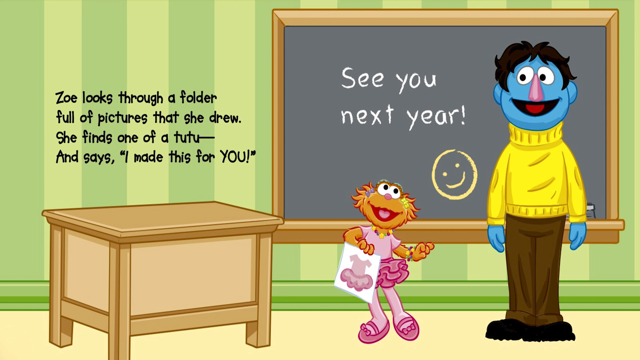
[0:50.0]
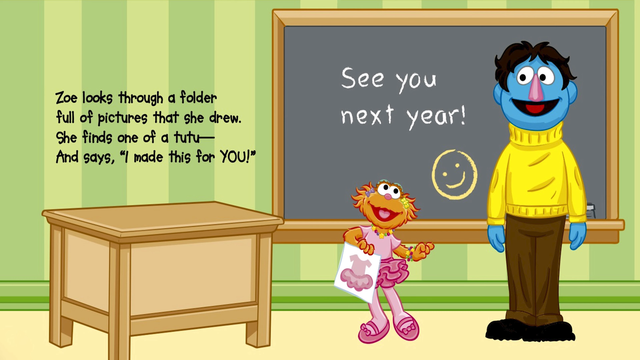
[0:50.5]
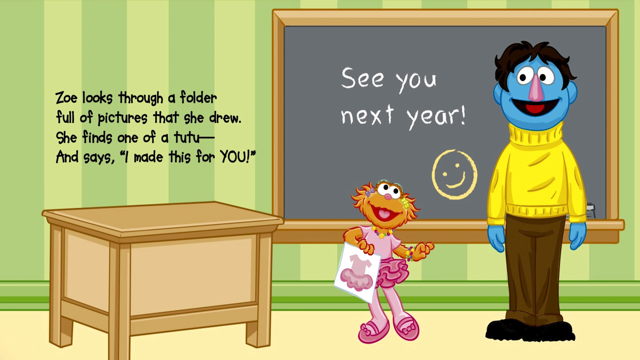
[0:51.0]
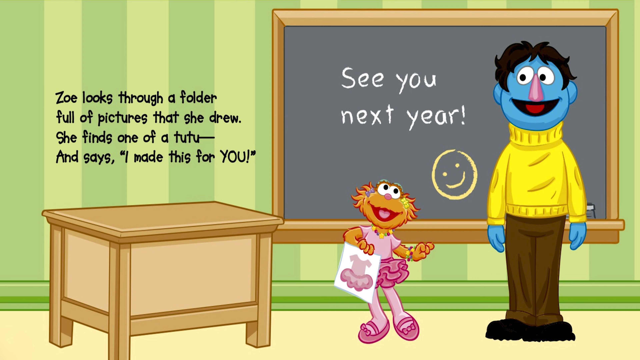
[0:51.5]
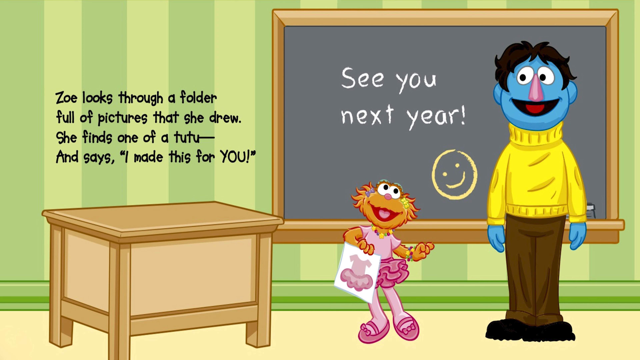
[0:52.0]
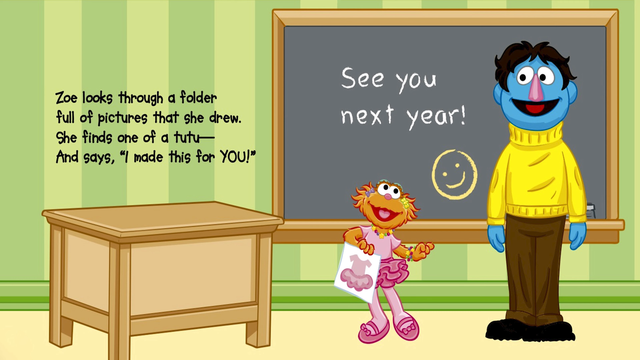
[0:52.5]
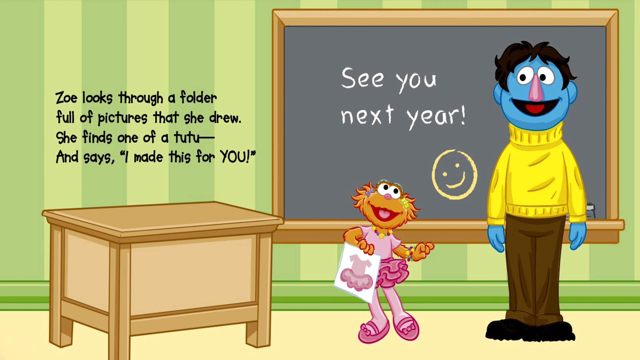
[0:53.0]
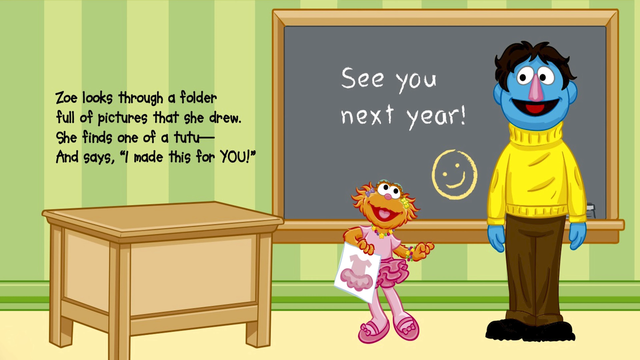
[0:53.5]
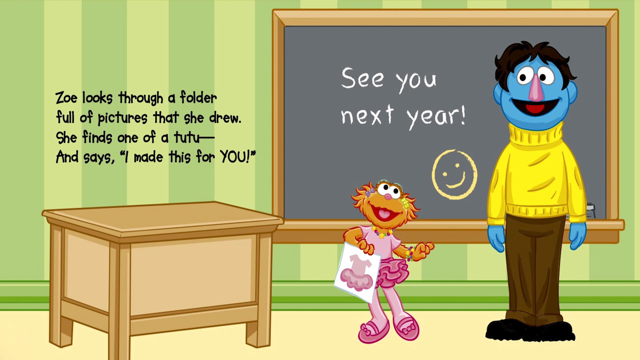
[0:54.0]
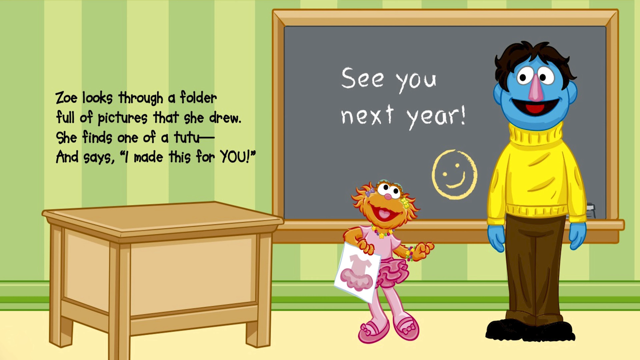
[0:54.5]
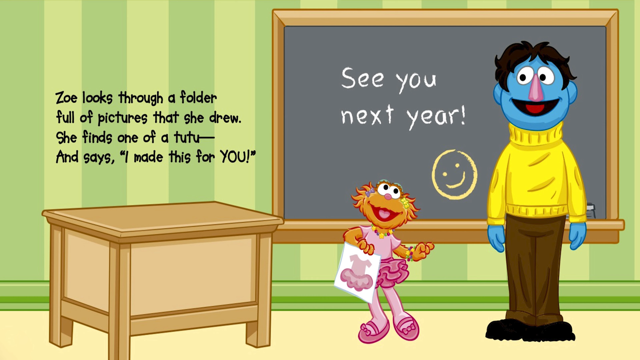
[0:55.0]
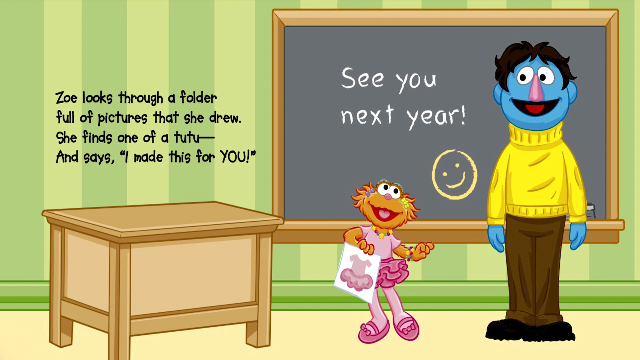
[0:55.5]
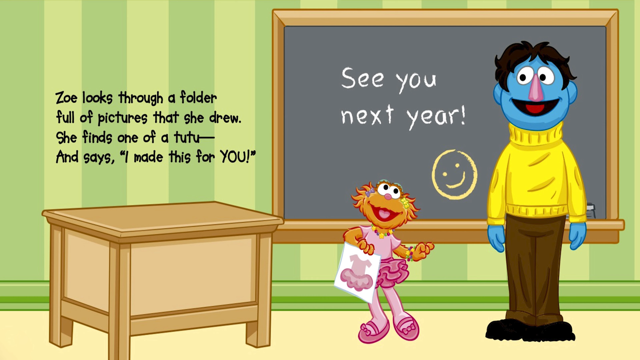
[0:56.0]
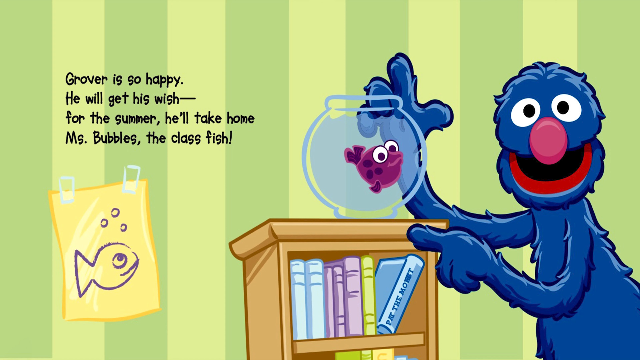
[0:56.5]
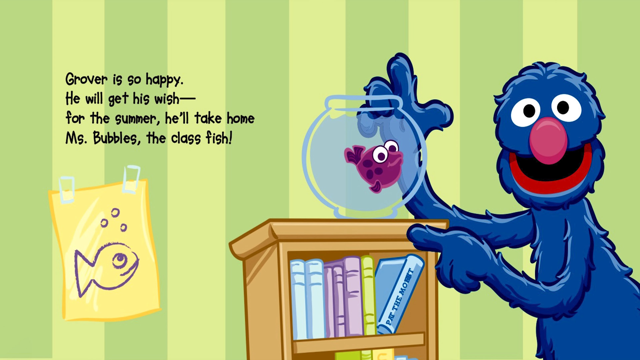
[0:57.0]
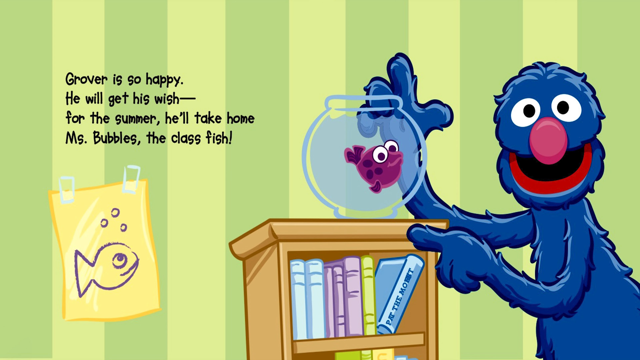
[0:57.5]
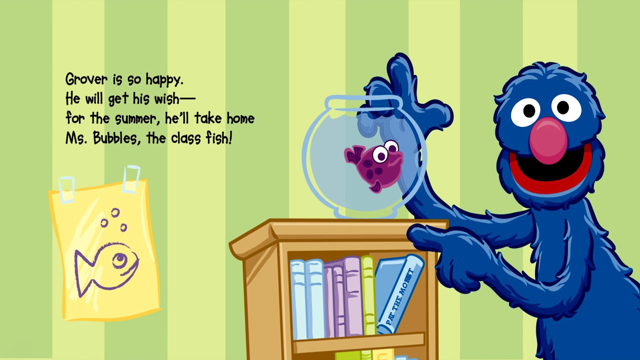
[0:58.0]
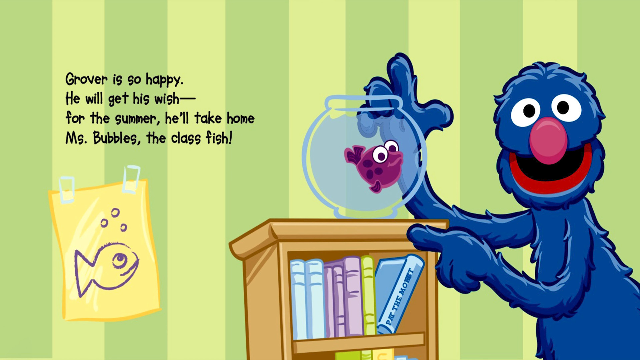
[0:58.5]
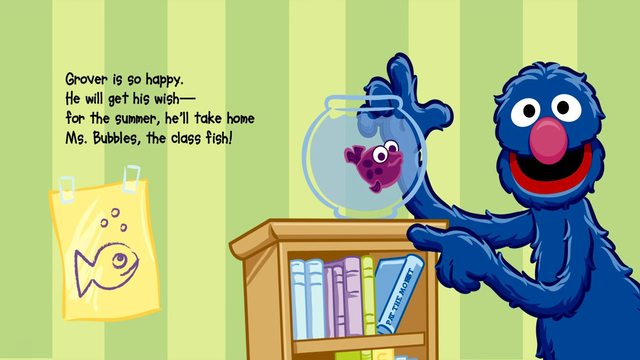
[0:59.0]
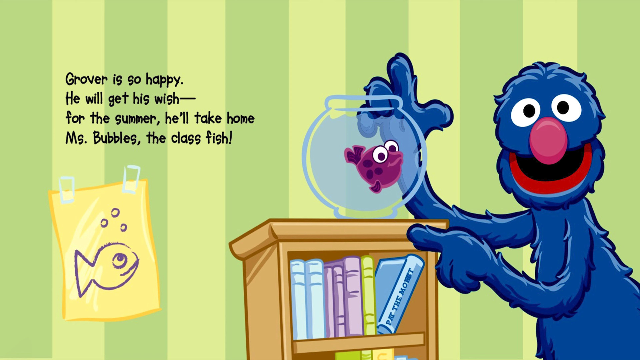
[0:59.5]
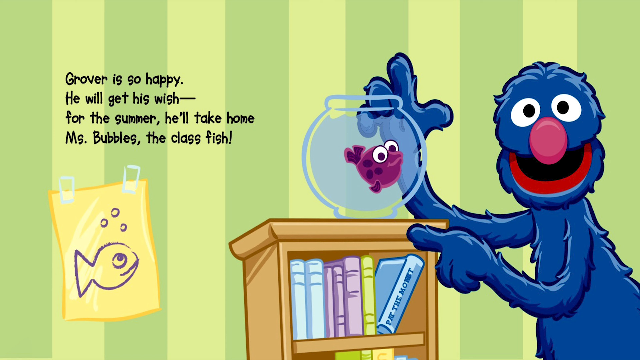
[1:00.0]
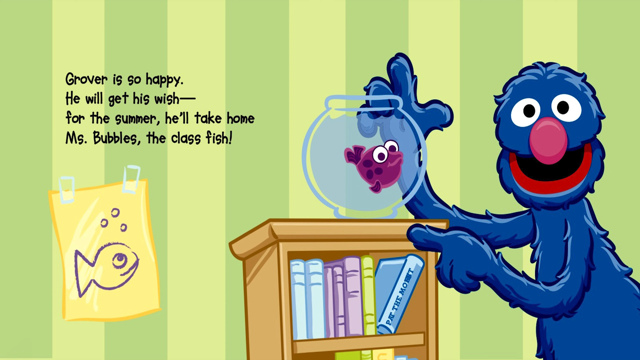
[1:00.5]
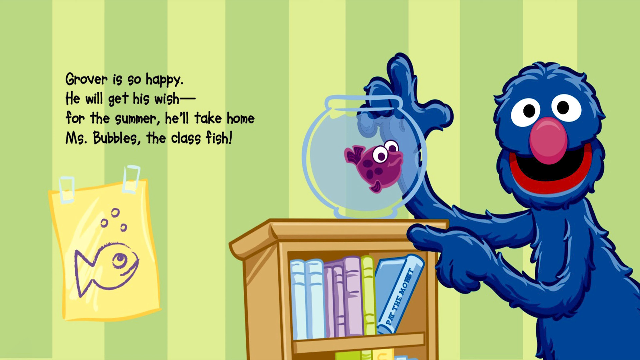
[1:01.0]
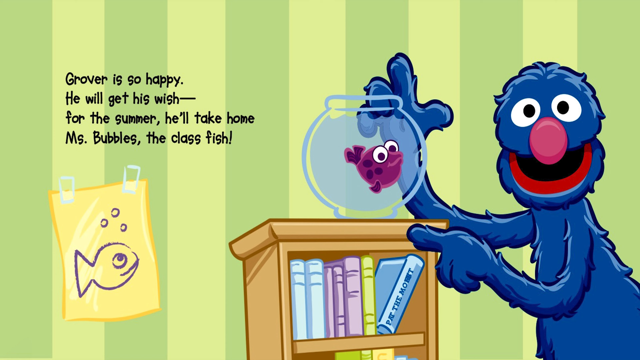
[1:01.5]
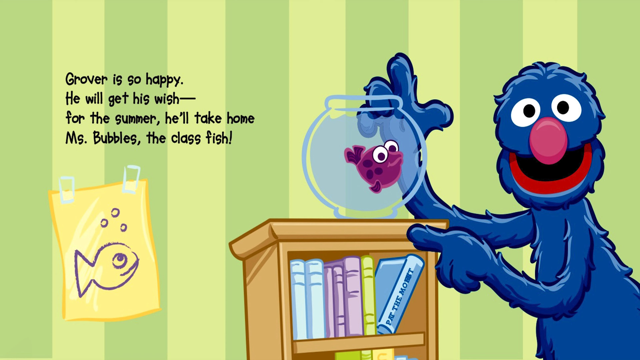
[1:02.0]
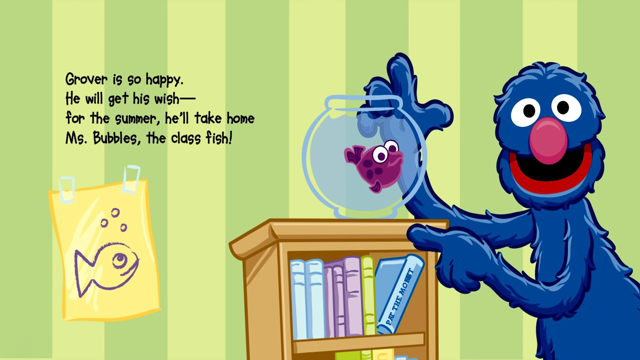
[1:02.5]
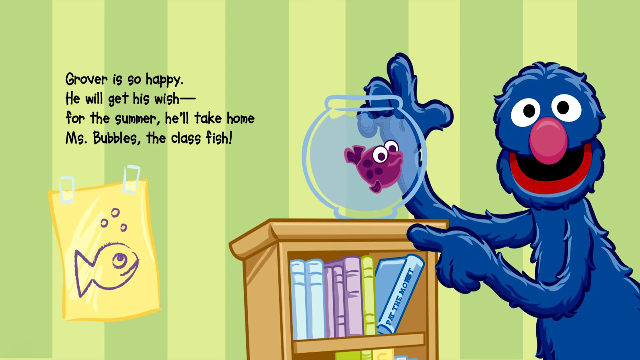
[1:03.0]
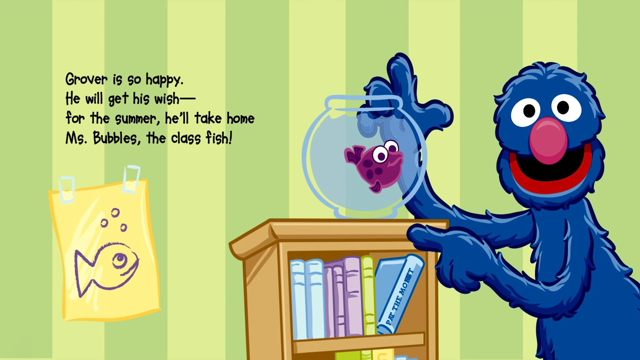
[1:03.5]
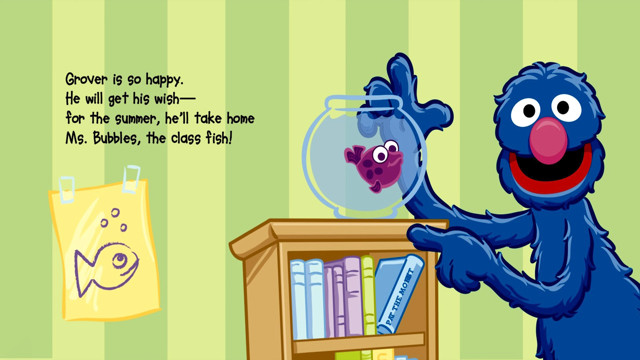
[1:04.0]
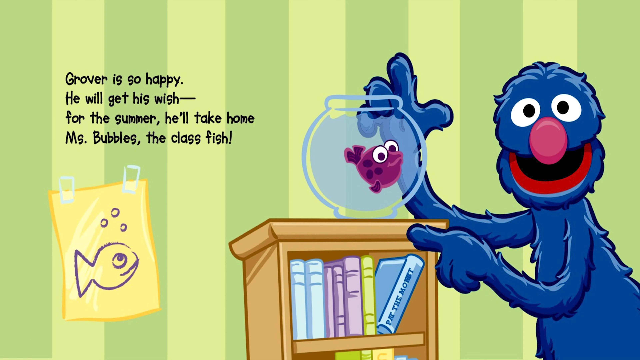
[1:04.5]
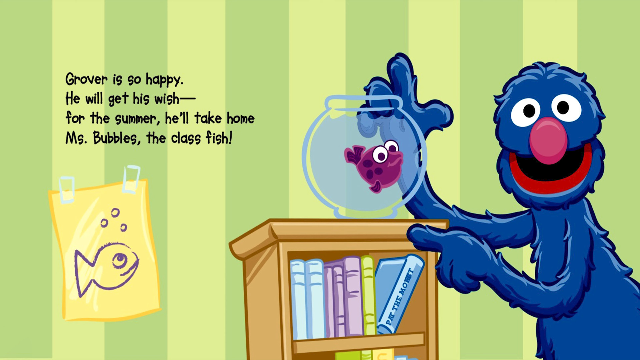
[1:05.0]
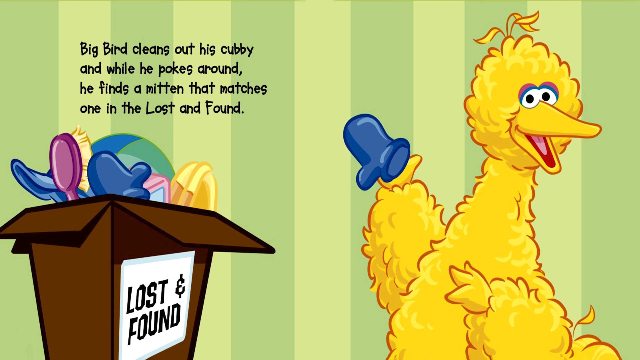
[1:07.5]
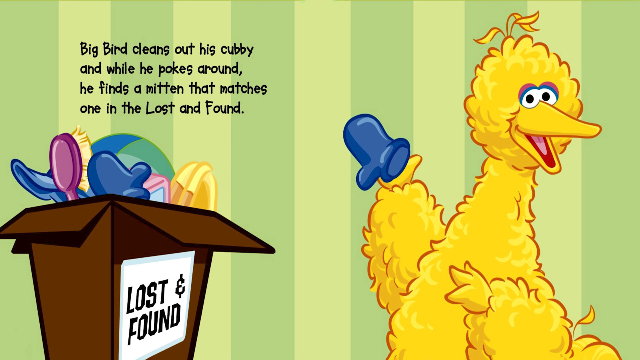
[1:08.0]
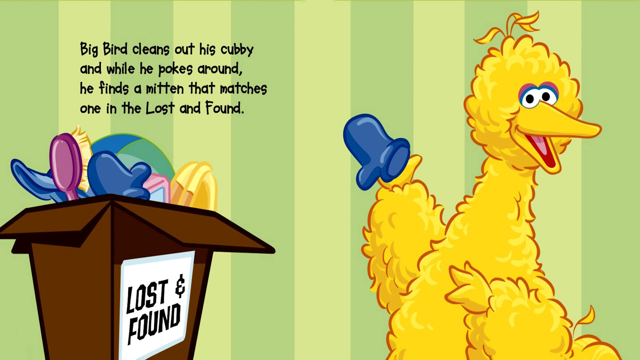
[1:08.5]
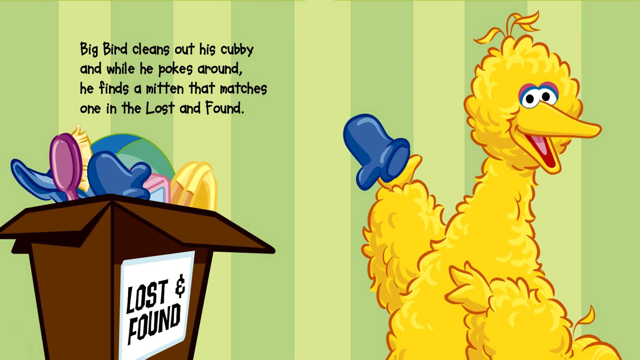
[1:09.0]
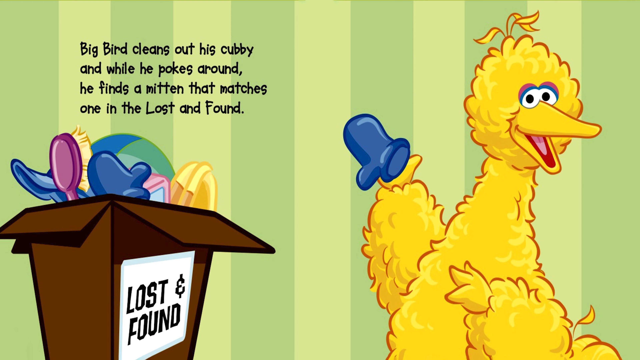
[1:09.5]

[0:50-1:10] Grover is by a fishbowl with a purple fish, and words on the wall say "Grover is so happy"; he does look happy. An orange character is shown, and beside her is the blue teacher, who wears a yellow sweater and brown pants. Behind the orange character and the teacher is the chalkboard, which says "See you next year," with a smiley face below the words. Writing on the wall says "Zoe looks through a folder full of pictures that she drew. She finds one of a tutu and says, I made this for you." The wall the chalkboard rests on is green. The orange character appears to be a little girl wearing pink clothing, which looks like a pink tutu like the one she drew.